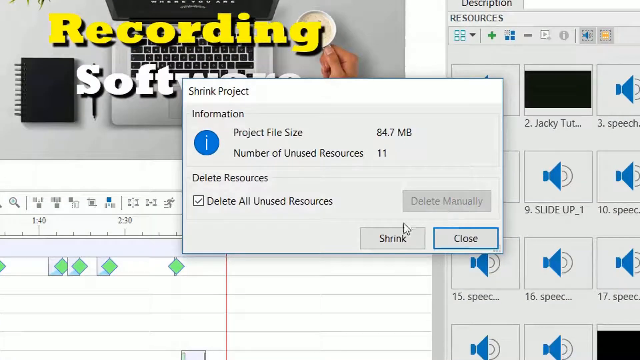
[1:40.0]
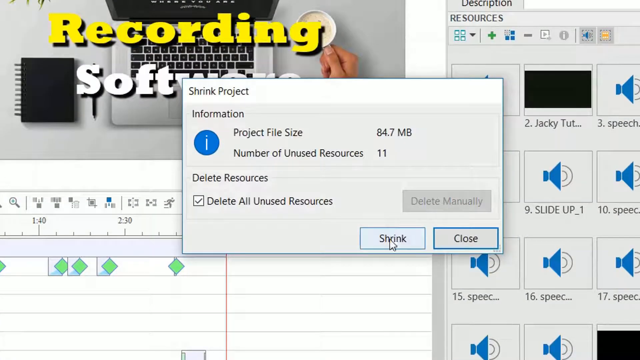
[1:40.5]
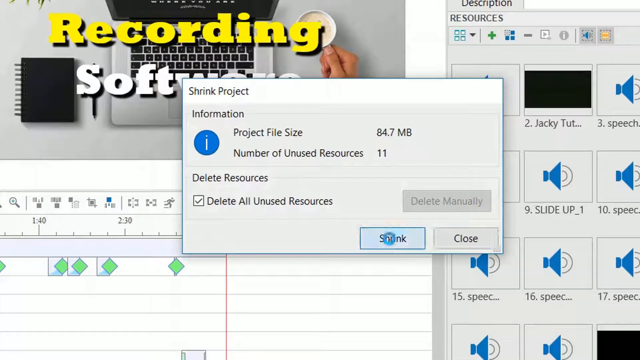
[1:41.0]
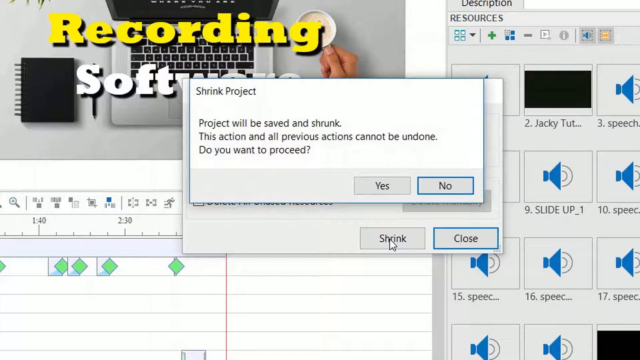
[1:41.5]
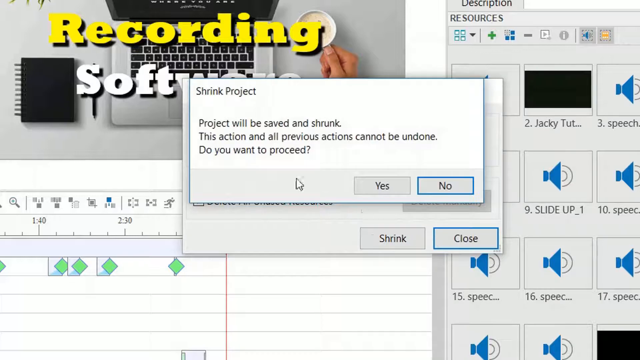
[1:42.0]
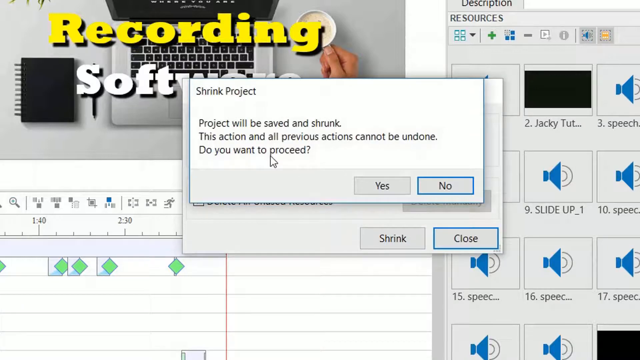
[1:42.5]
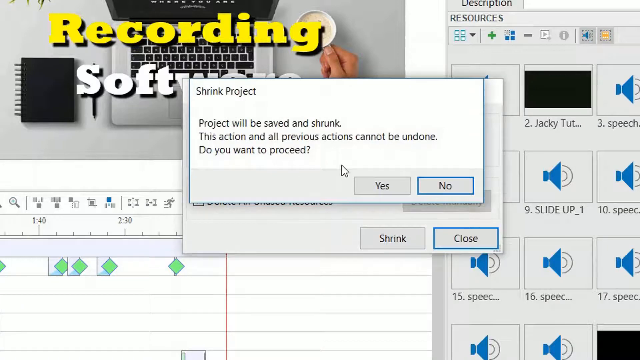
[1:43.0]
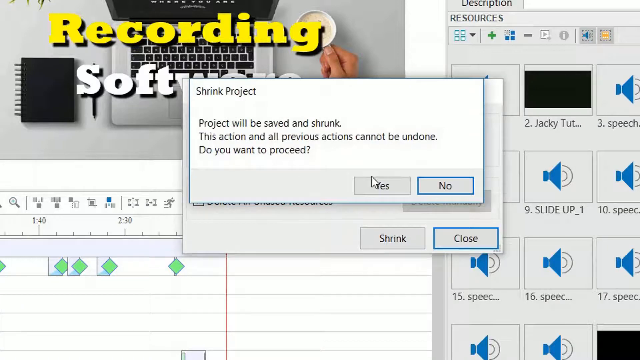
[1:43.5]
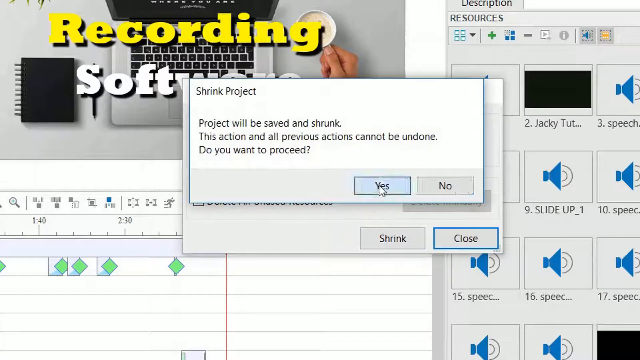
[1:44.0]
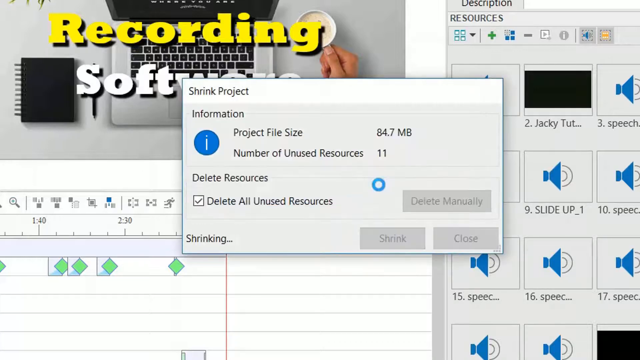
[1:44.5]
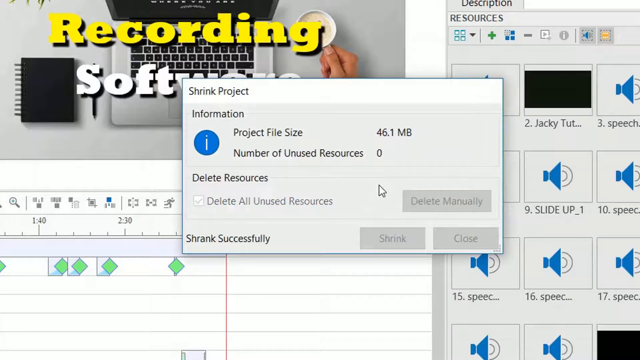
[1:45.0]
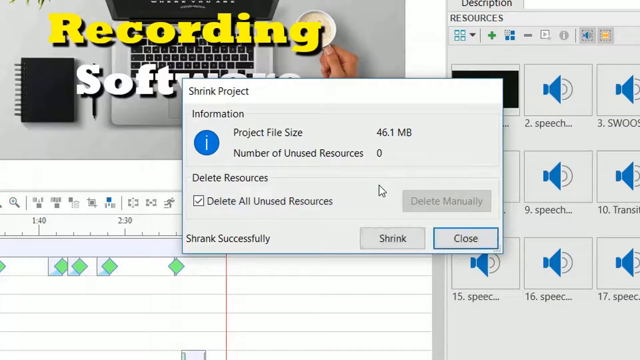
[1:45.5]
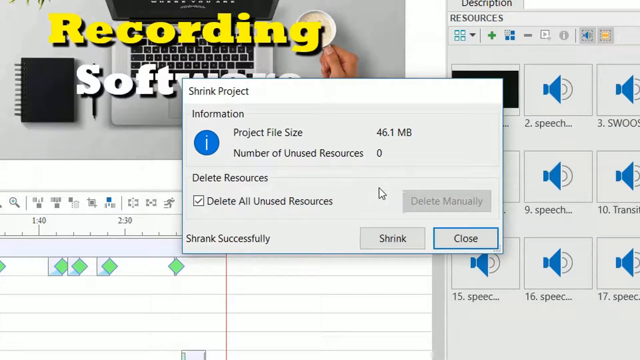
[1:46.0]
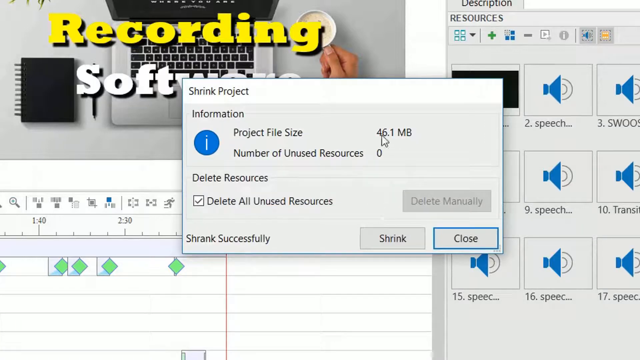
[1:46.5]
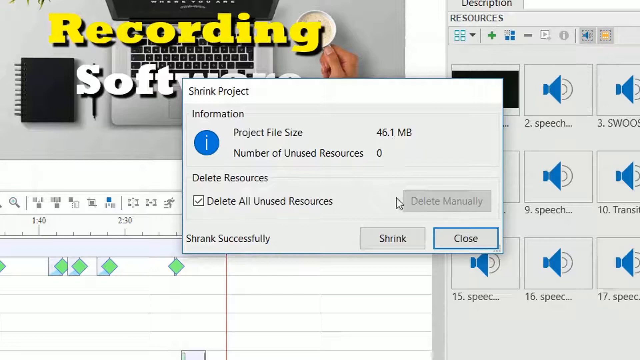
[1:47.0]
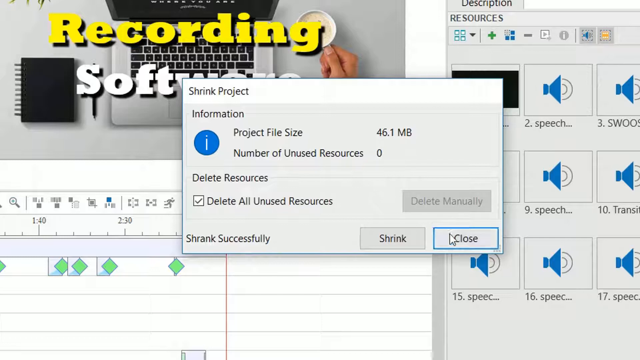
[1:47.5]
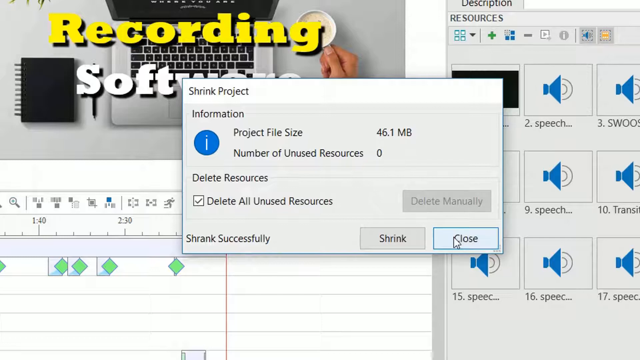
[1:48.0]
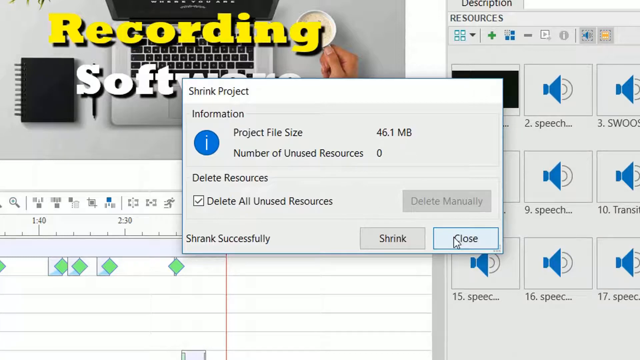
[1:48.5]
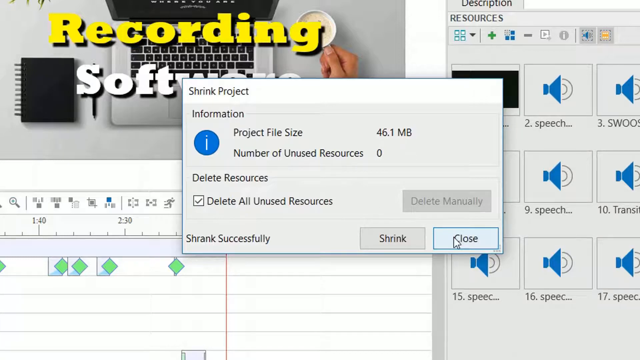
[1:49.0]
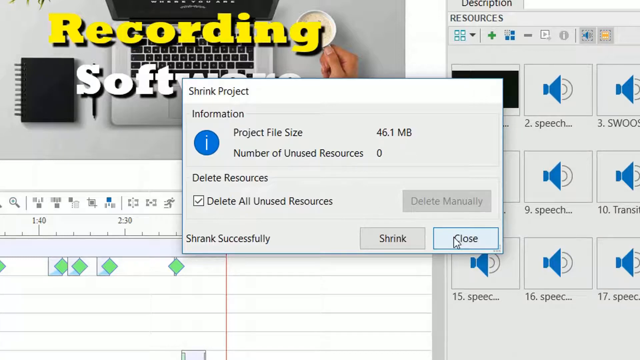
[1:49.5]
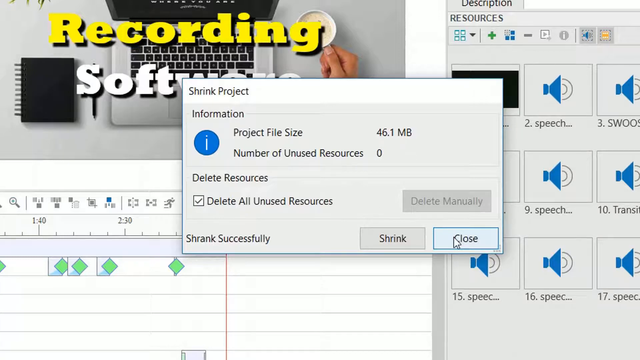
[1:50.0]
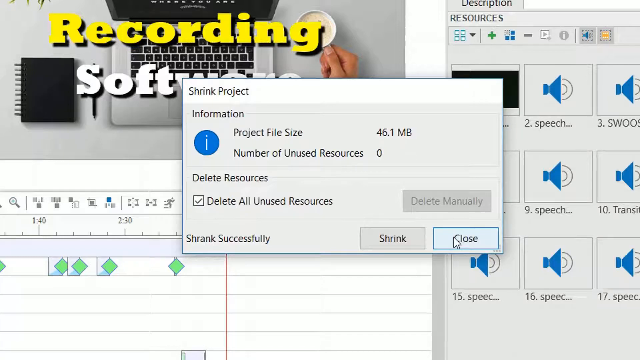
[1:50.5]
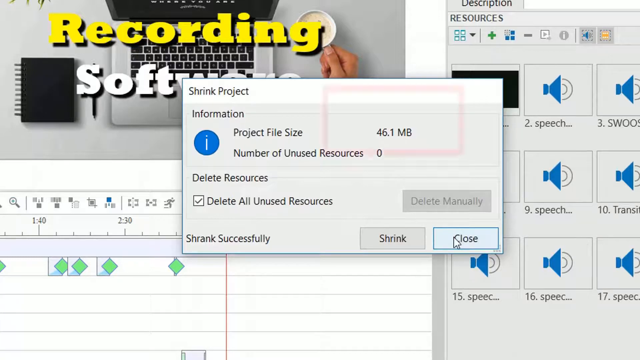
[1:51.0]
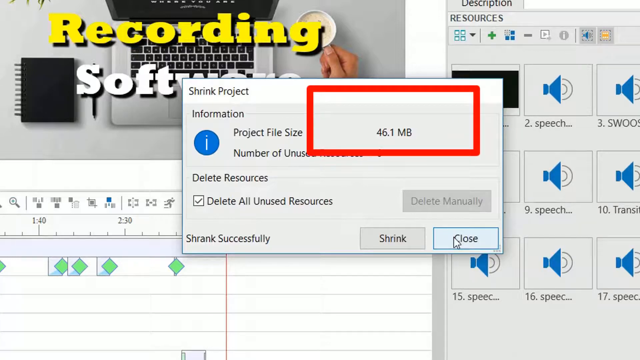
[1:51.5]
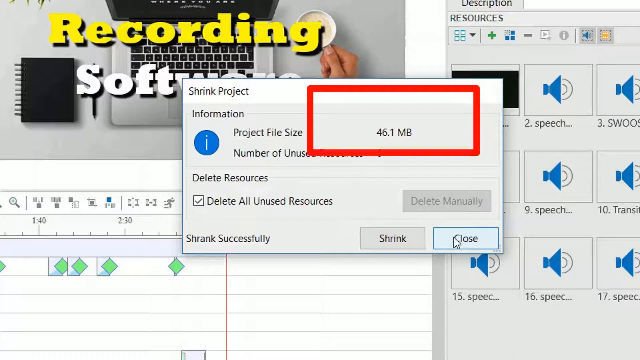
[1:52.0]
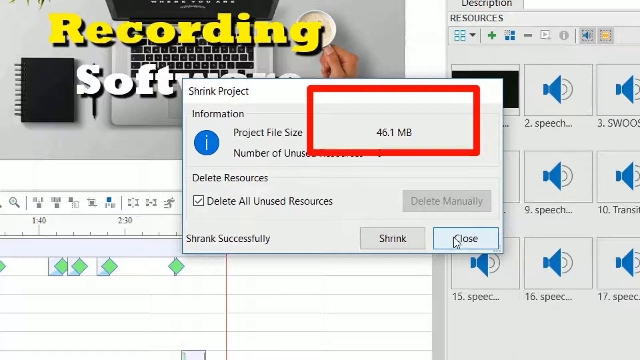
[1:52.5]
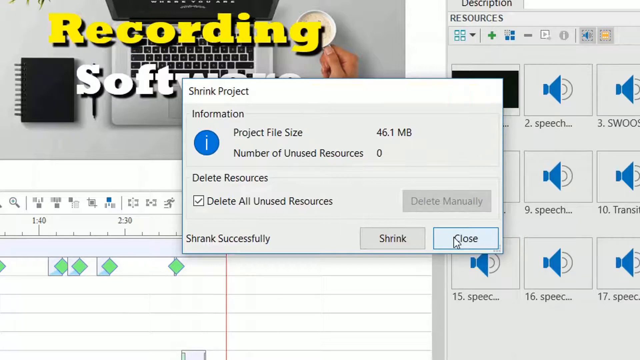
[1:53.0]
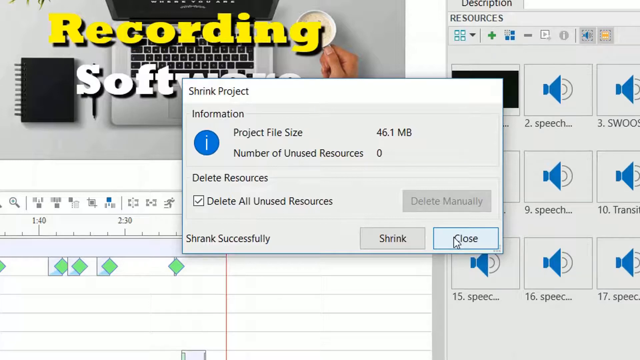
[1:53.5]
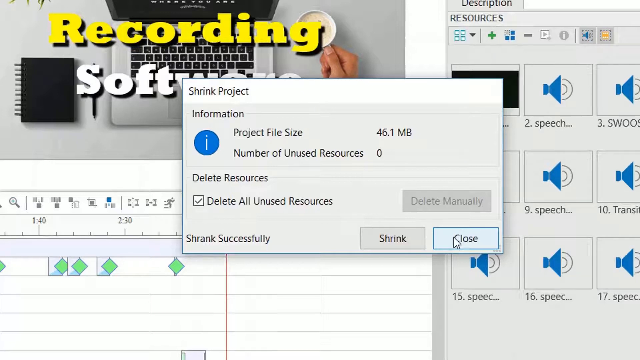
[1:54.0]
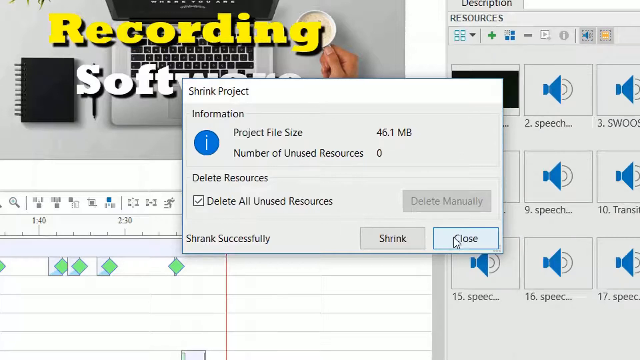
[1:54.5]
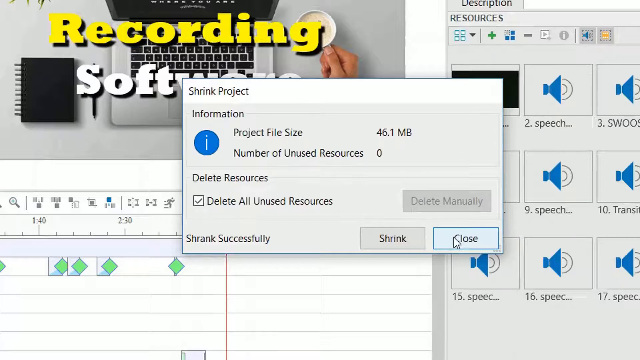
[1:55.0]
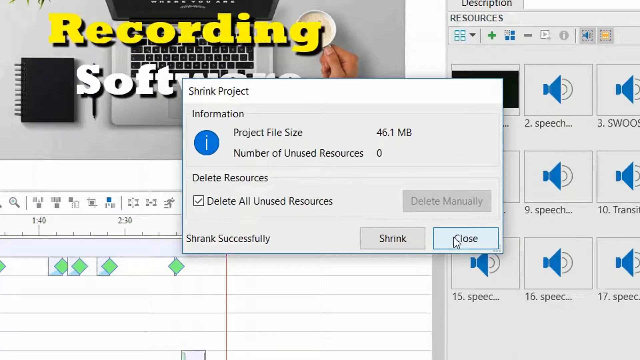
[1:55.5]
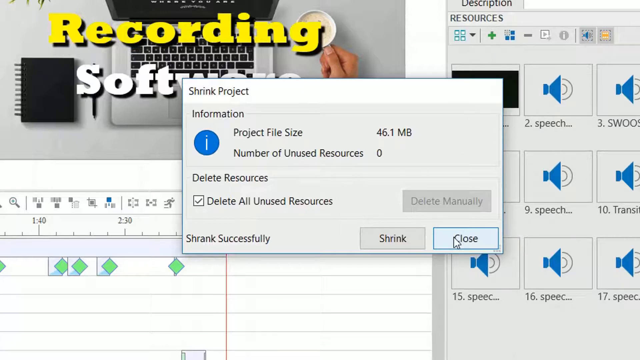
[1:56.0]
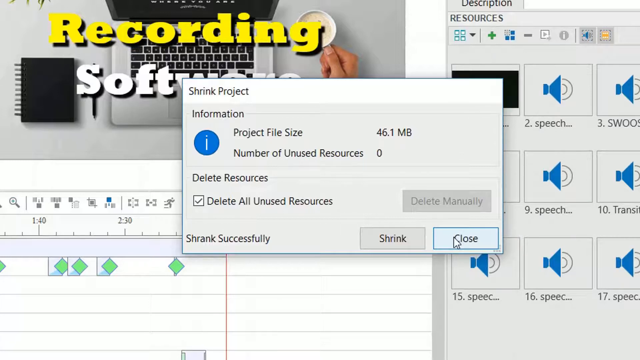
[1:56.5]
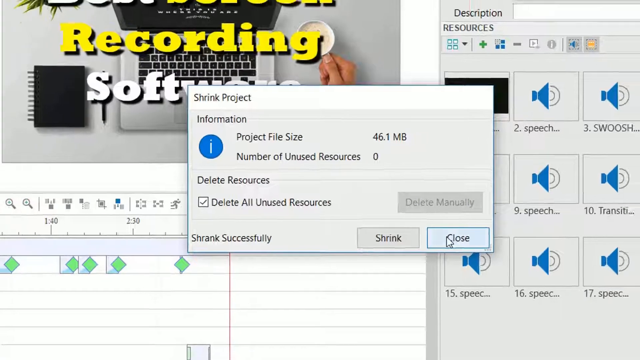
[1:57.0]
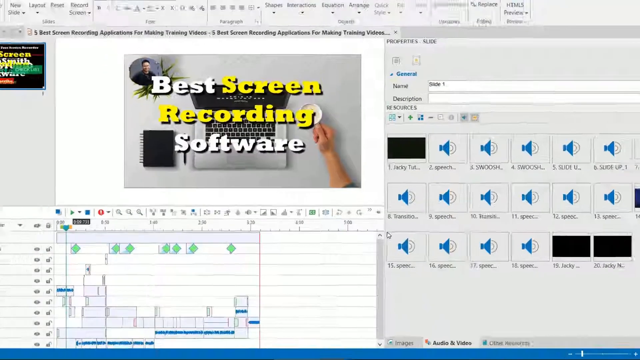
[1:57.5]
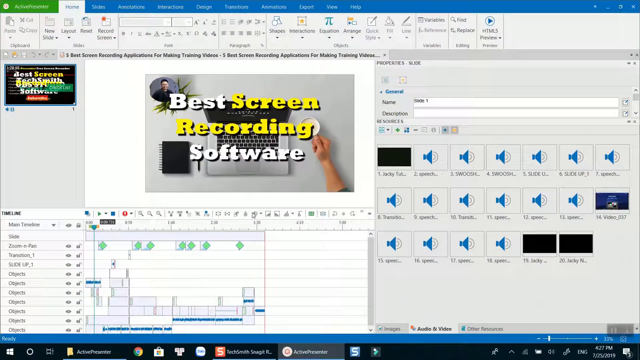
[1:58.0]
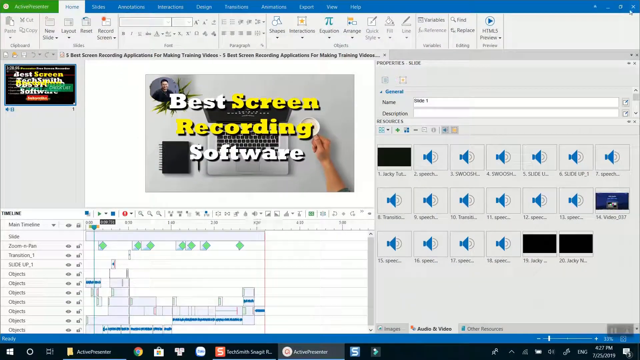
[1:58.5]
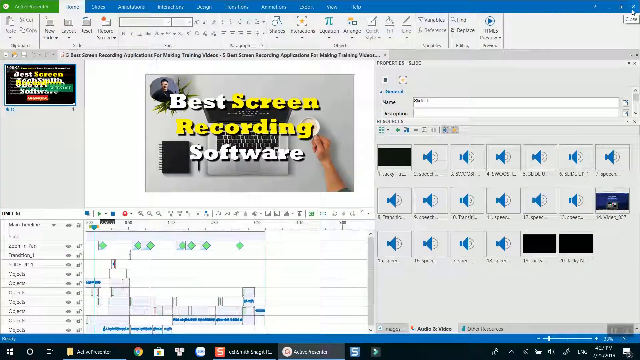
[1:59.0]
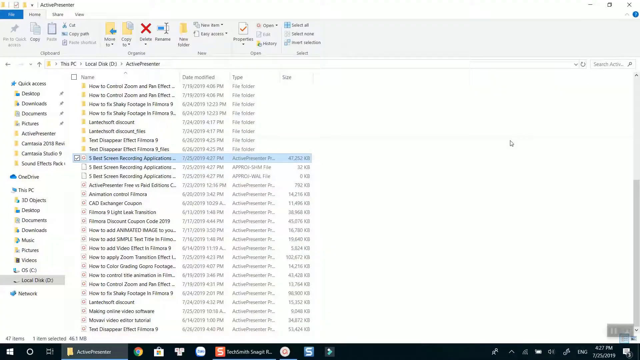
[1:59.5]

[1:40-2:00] The prompt "shrink project, project will be saved and shrunk. This action and all previous actions cannot be undone. Do you want to proceed?" remains on screen while he moves the mouse. He apparently presses yes. The shrink project information now shows a project file size of "46.1 megabyte," and "shrank successfully" appears at the bottom left. A red rectangle pops up surrounding the 46.1 megabyte, and then the window closes. The view zooms out to display the whole window of the software with the full editing platform. Light green diamond shapes are in the area where clips are moved around, cut and edited. Just above the editing space is an advertising image of a desk, a laptop, a small black ring binder book, a pen, and a person's hand resting on the handle of a coffee mug, with the words "best screen recording software."